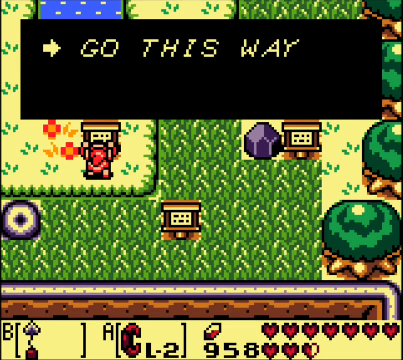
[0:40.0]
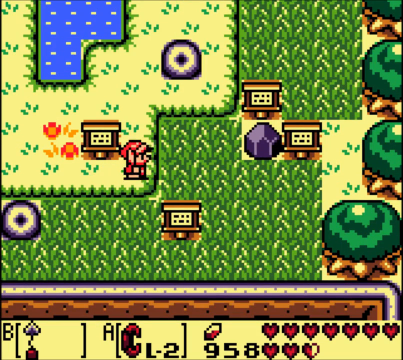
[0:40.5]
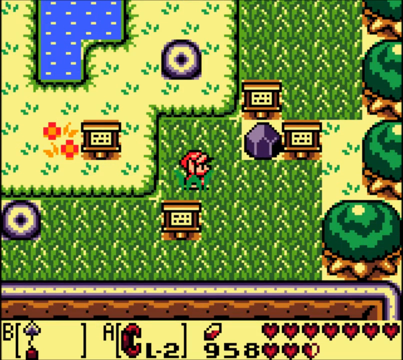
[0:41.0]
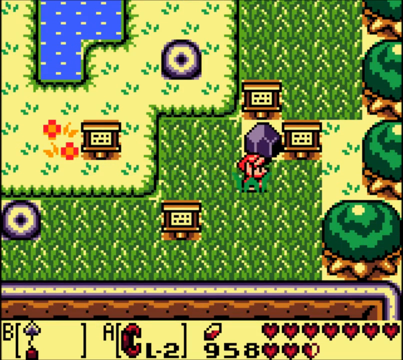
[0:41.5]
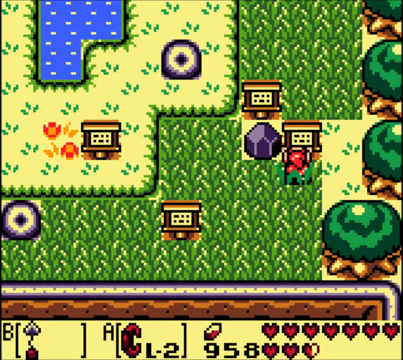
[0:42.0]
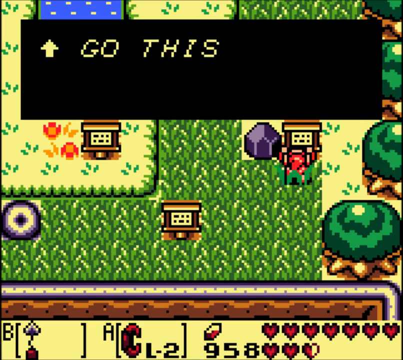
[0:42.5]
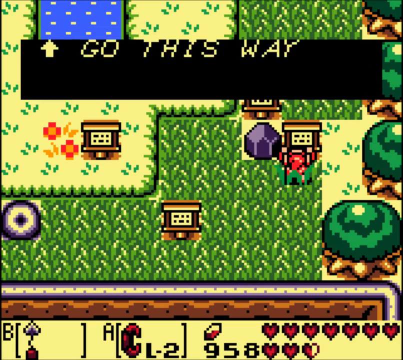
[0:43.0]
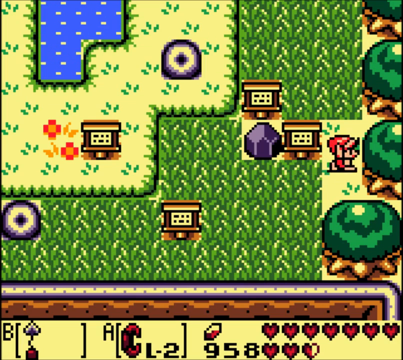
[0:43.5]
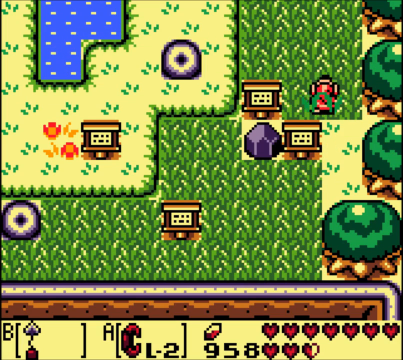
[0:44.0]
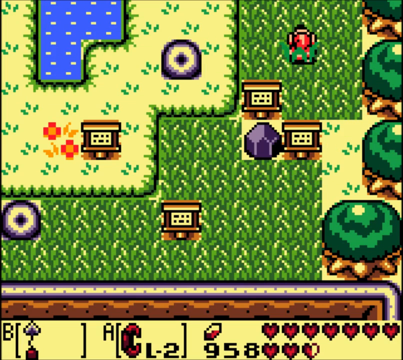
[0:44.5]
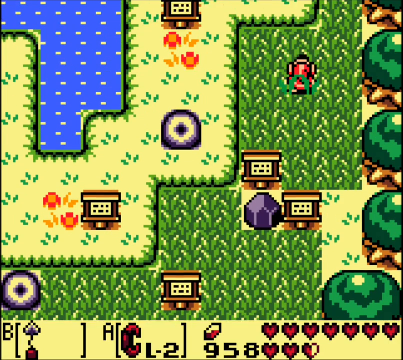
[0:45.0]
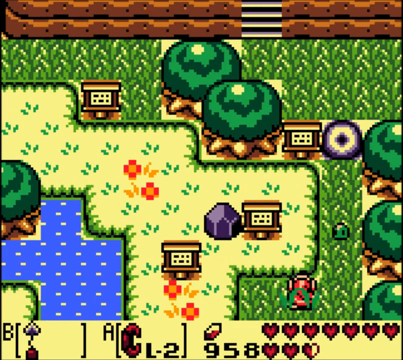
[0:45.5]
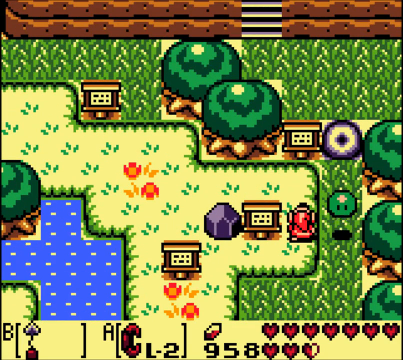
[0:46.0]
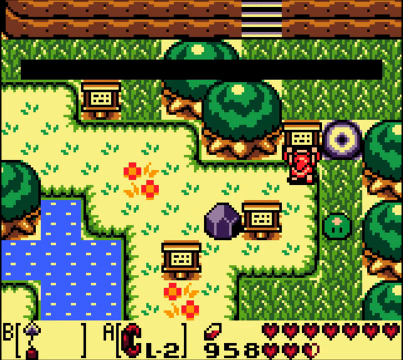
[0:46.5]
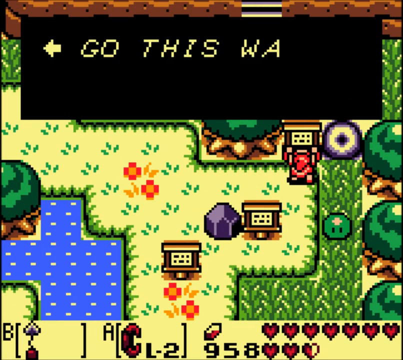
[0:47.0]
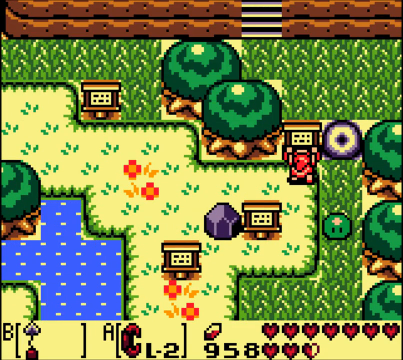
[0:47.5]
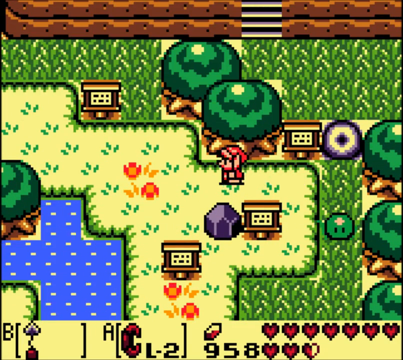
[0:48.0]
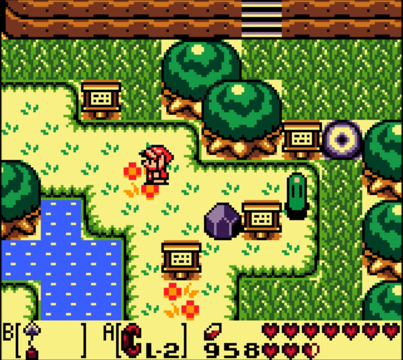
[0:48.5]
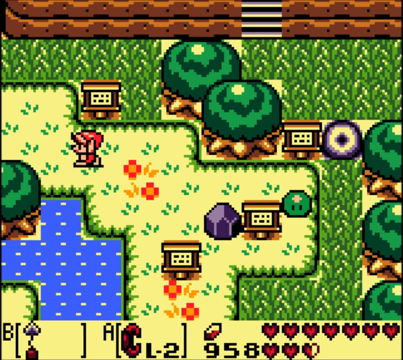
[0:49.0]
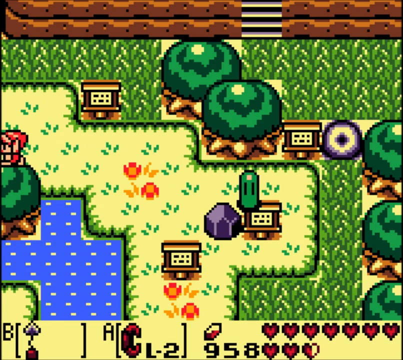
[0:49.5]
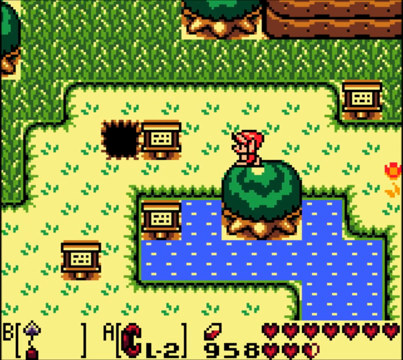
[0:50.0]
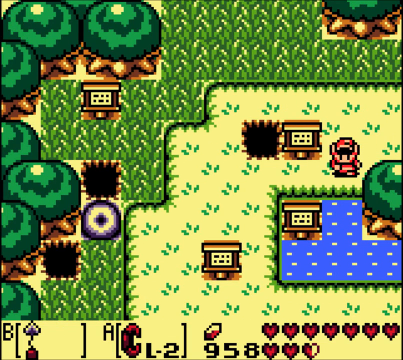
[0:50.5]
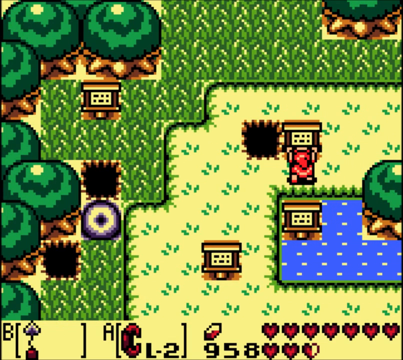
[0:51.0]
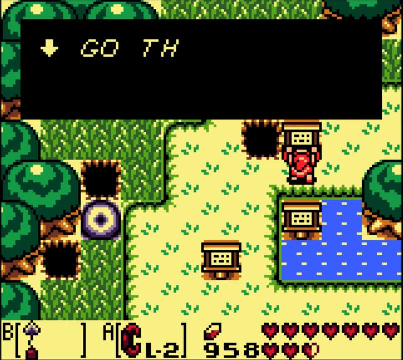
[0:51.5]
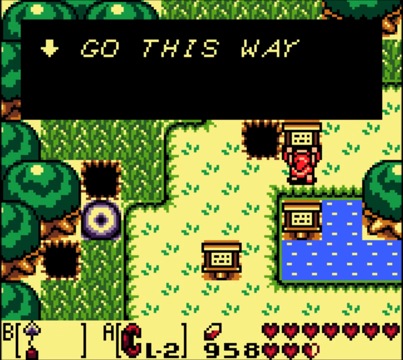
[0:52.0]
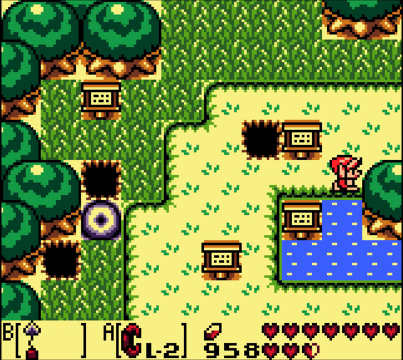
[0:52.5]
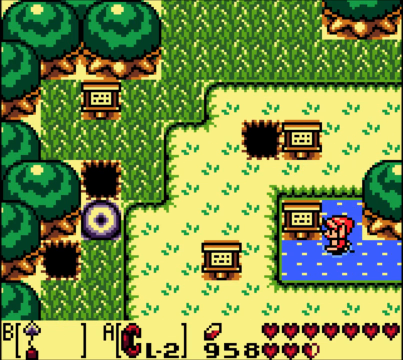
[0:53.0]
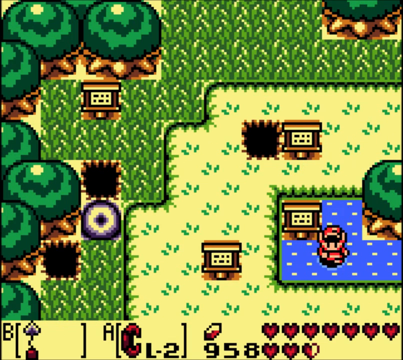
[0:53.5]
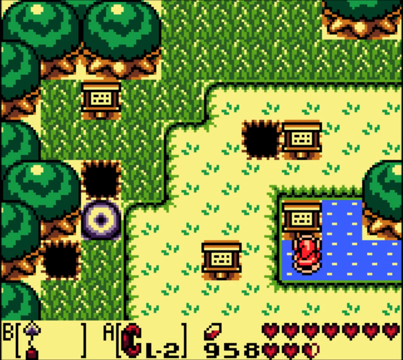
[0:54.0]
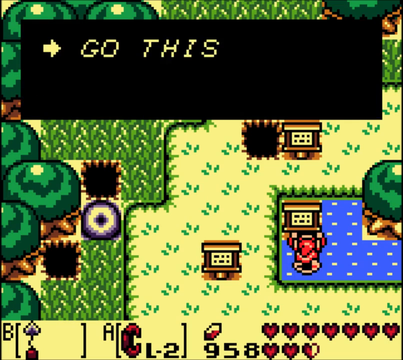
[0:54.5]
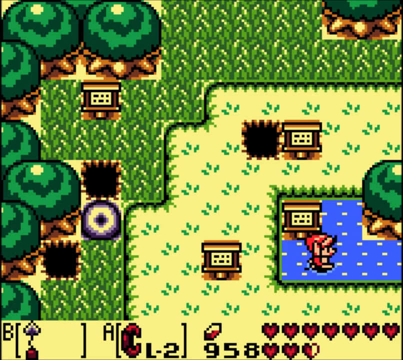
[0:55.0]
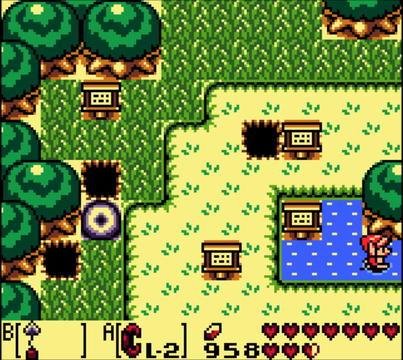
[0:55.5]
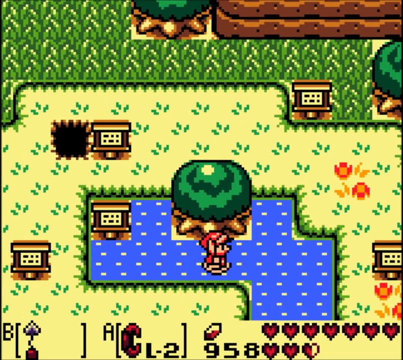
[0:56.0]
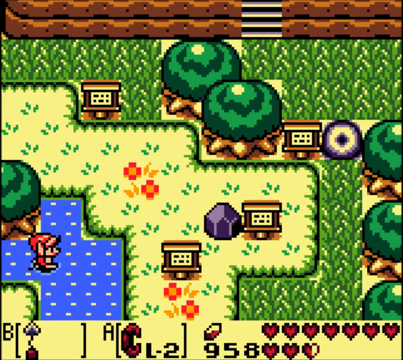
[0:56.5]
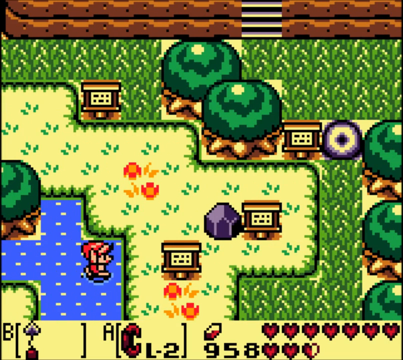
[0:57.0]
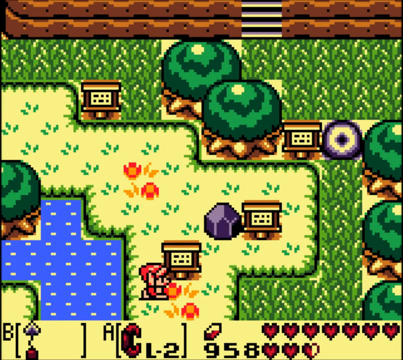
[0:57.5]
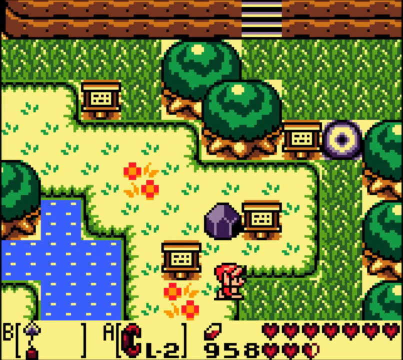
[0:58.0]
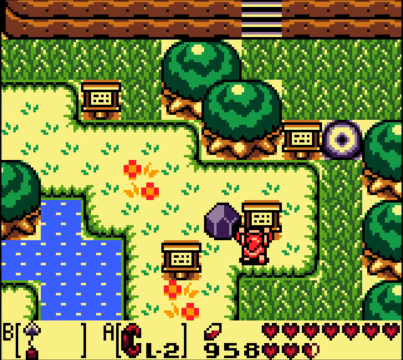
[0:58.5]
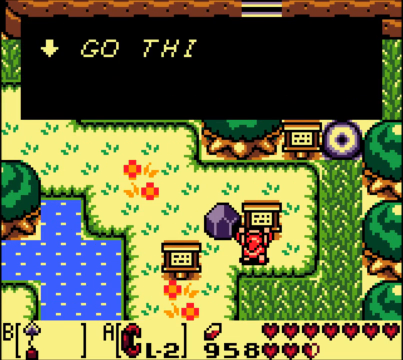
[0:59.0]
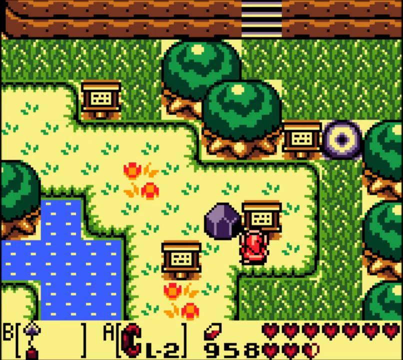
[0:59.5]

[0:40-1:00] The character reads a sign that says "go this way" with a right arrow and moves right until he reaches the next sign, which says "go this way" with an arrow pointing up. He travels across grass, shown in green. On his right-hand side he passes a green blob character, which appears and leaps into the air; it has a pinkish-beige cross on its forehead and two eyes. The next sign says "go this way" with a left arrow. The character moves left, the screen scrolls as he crosses the edge of the play area, and the blob follows him. The next sign he reads says "go this way" with a down arrow. The following sign is in a water area, so he paddles into the water to read it; it has a right arrow and reads "go this way."